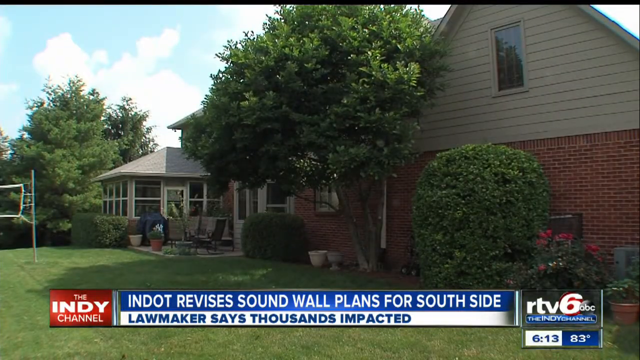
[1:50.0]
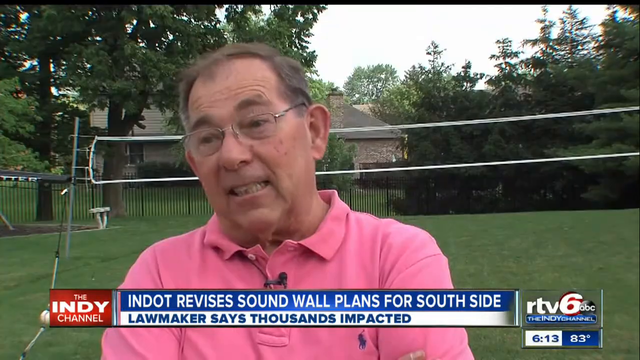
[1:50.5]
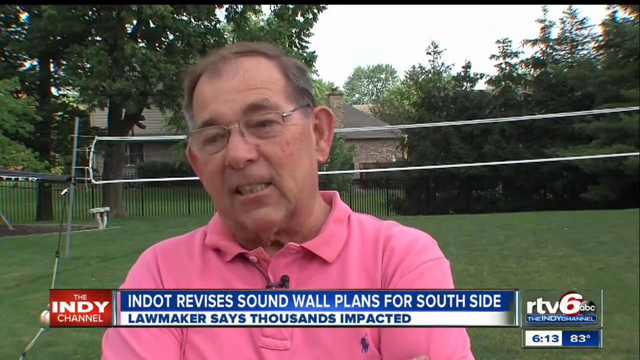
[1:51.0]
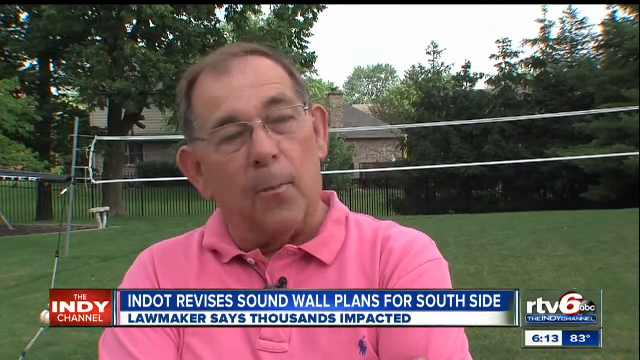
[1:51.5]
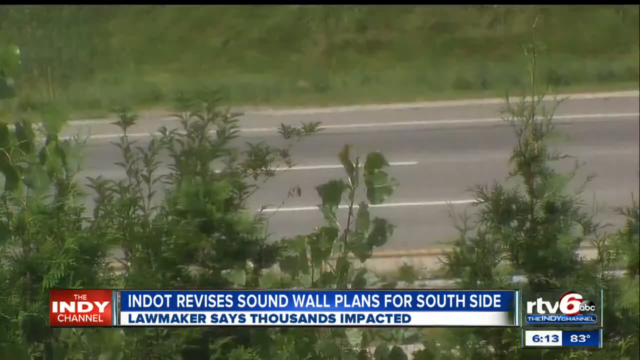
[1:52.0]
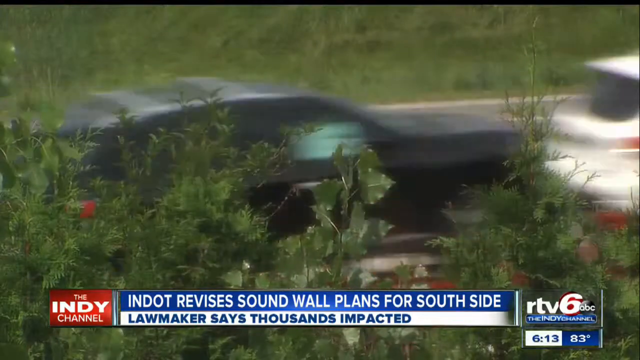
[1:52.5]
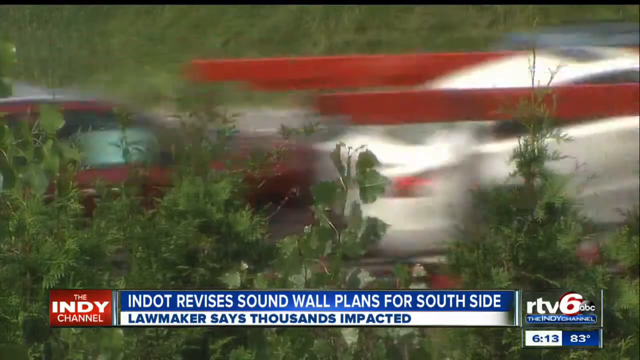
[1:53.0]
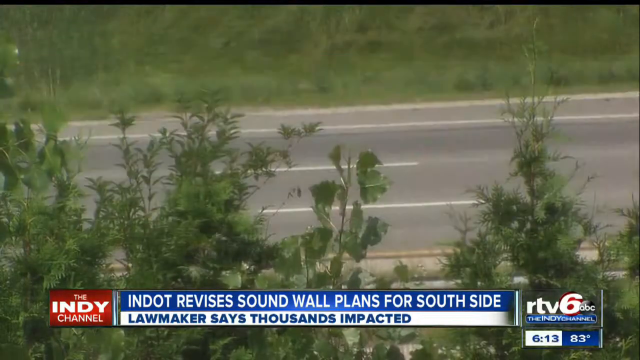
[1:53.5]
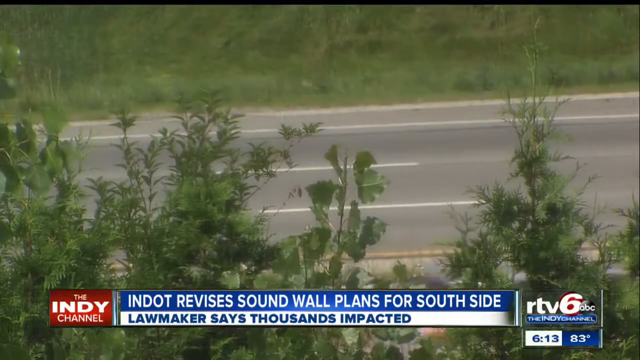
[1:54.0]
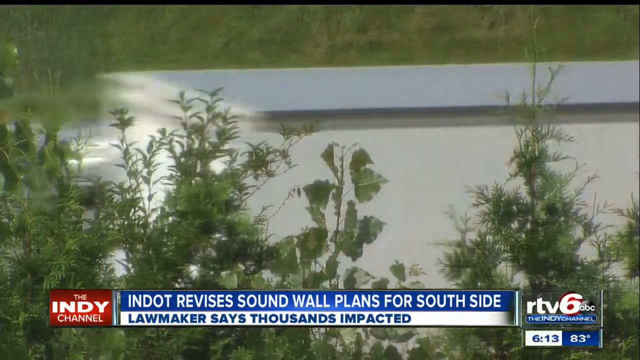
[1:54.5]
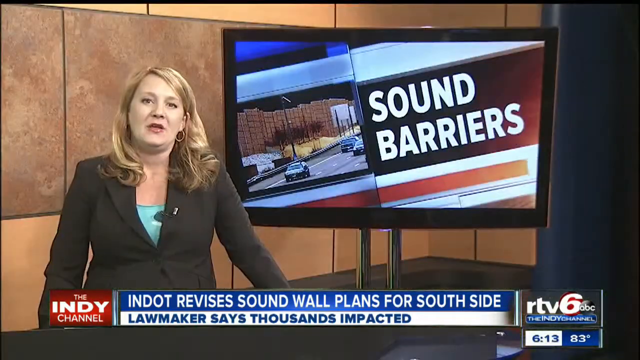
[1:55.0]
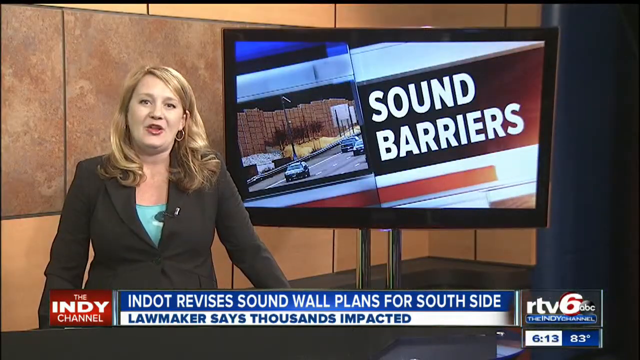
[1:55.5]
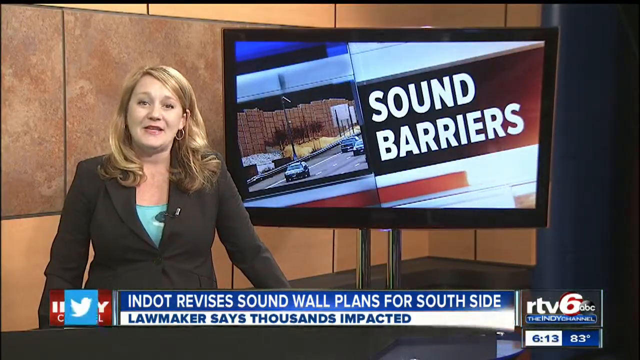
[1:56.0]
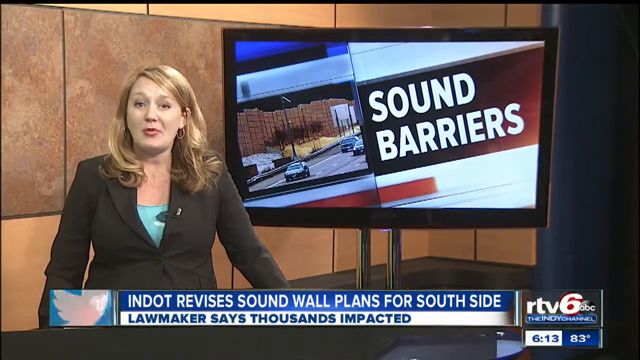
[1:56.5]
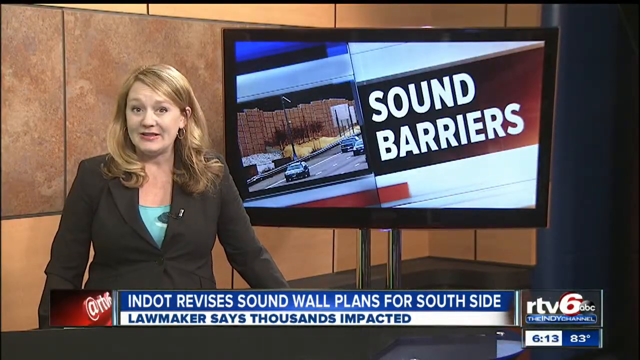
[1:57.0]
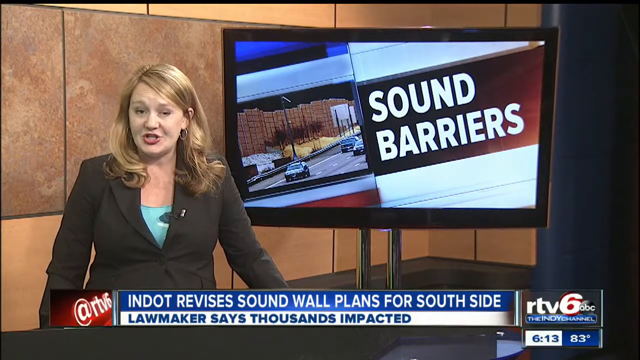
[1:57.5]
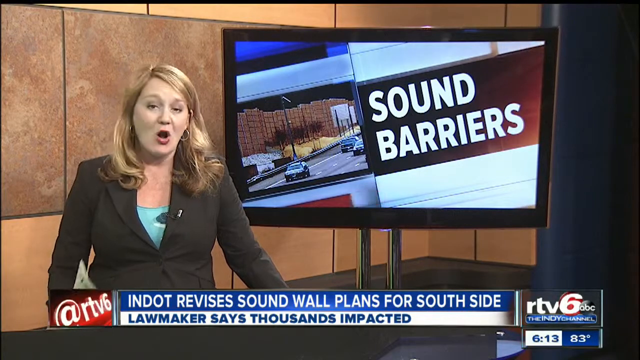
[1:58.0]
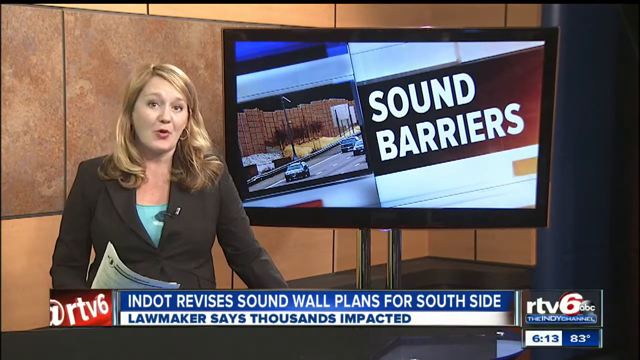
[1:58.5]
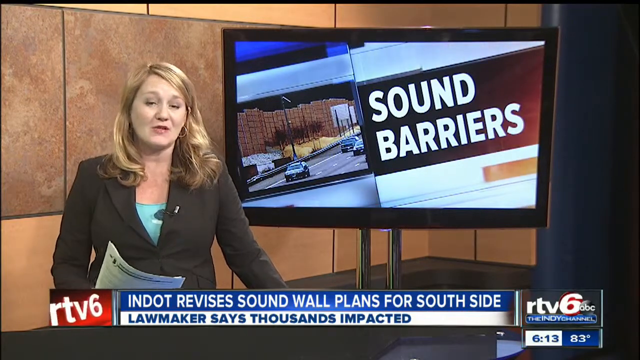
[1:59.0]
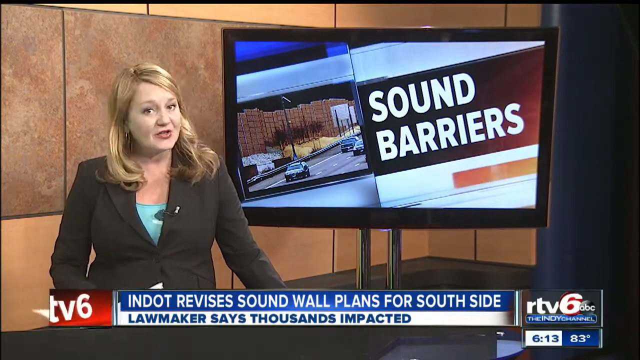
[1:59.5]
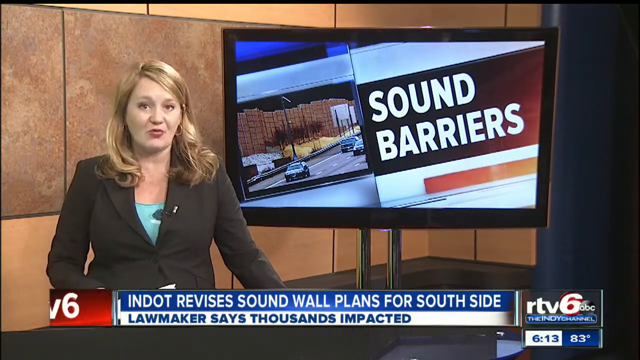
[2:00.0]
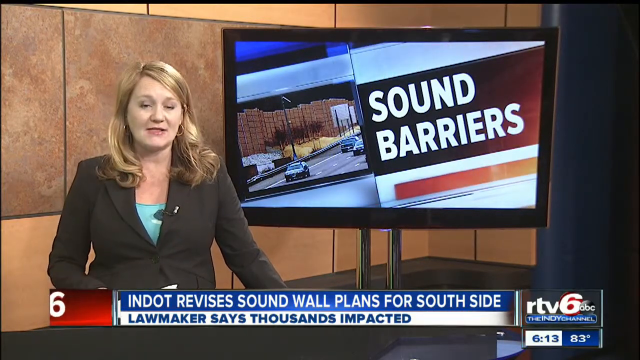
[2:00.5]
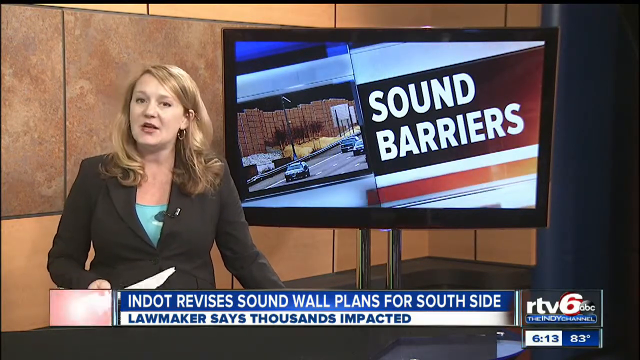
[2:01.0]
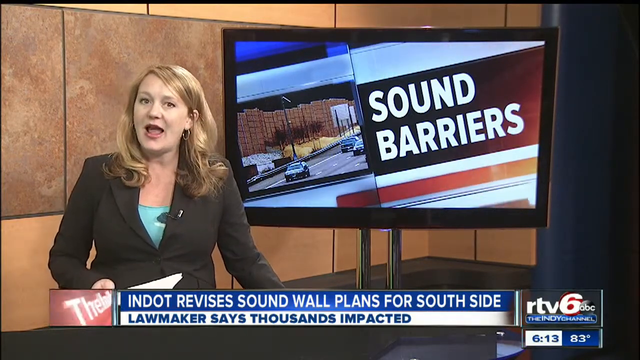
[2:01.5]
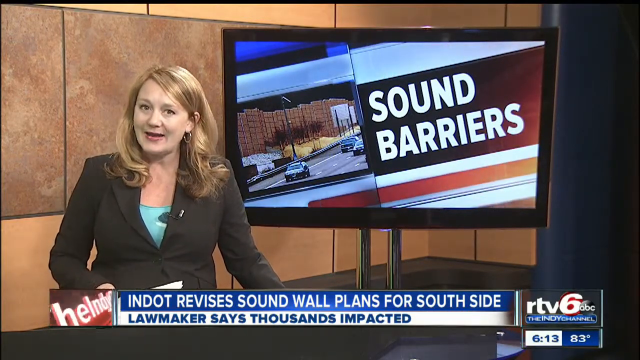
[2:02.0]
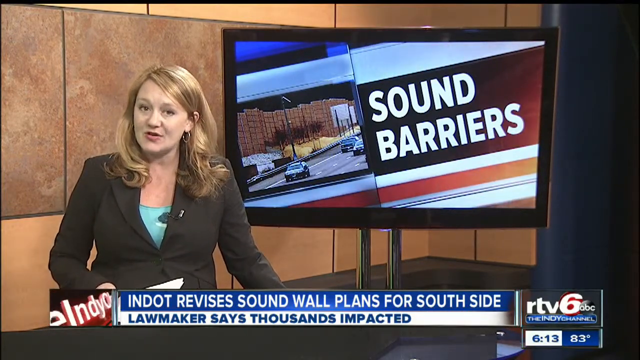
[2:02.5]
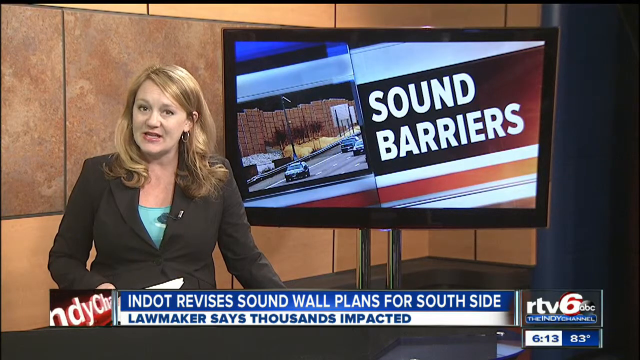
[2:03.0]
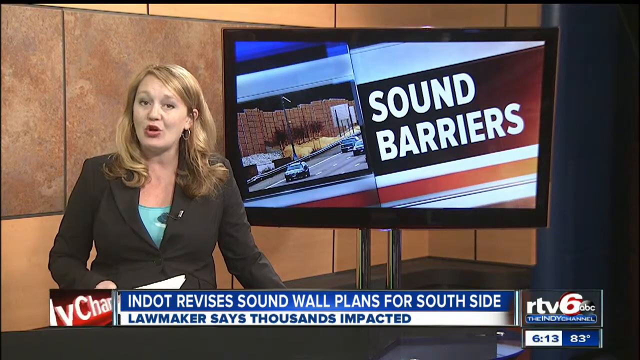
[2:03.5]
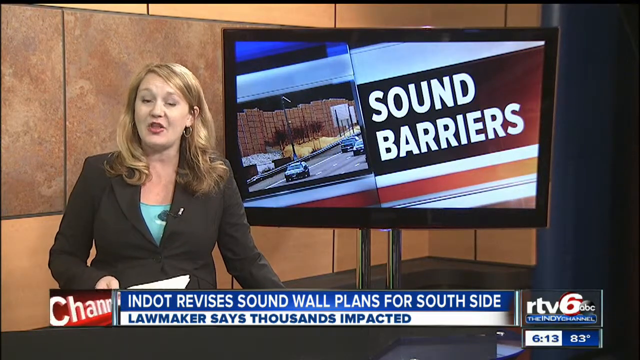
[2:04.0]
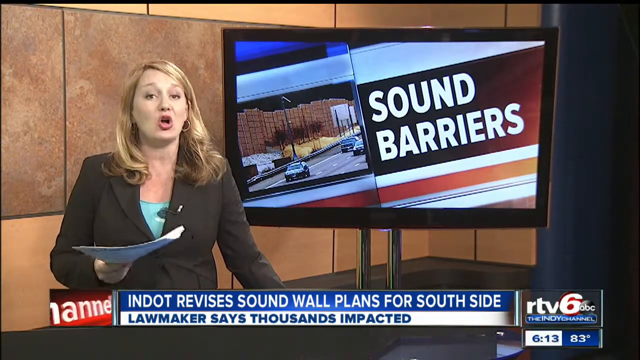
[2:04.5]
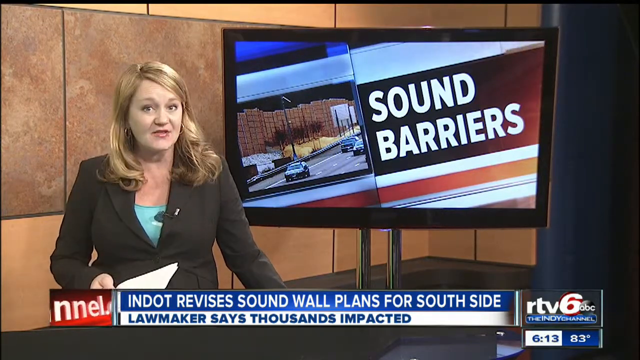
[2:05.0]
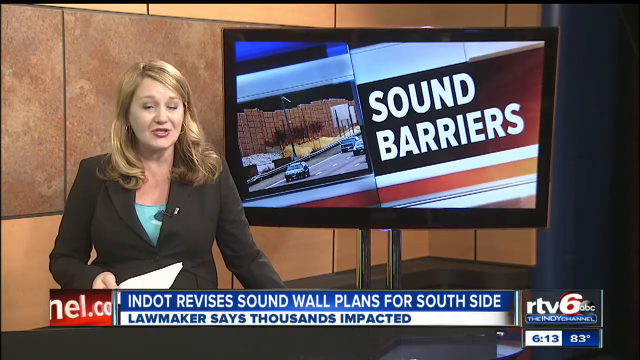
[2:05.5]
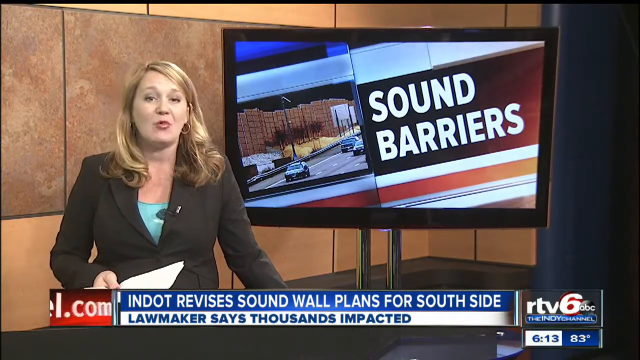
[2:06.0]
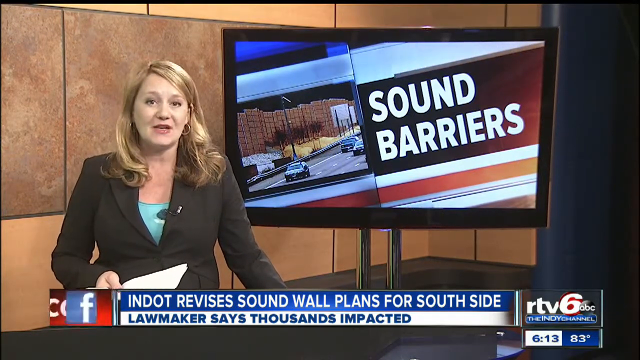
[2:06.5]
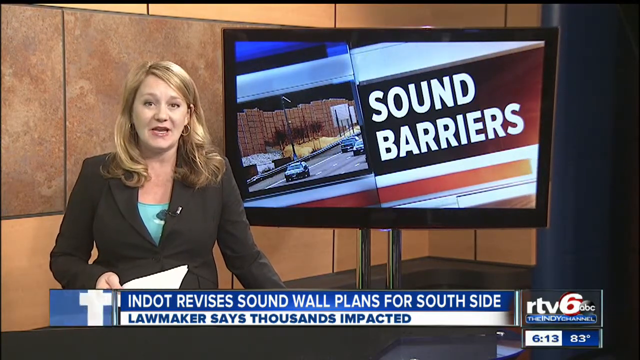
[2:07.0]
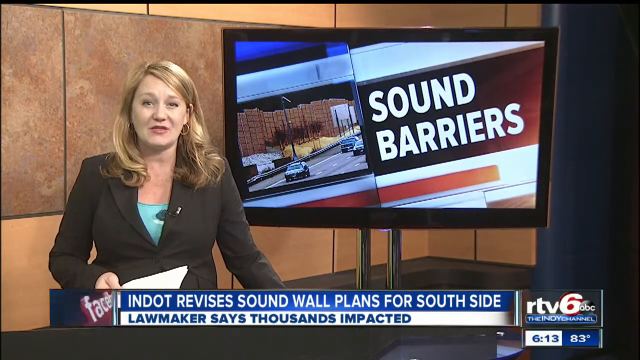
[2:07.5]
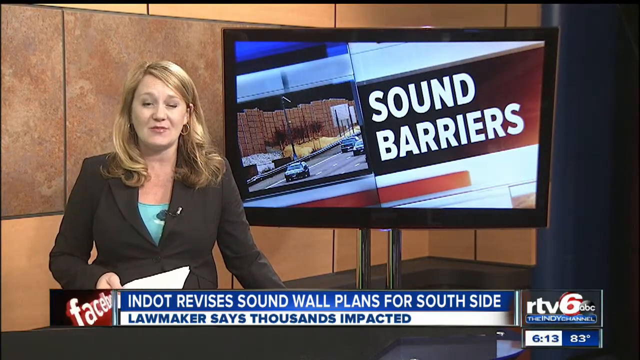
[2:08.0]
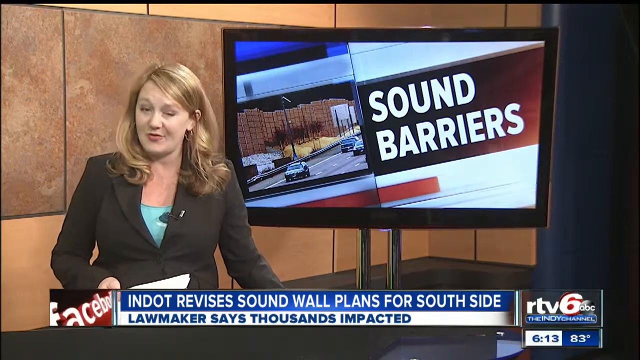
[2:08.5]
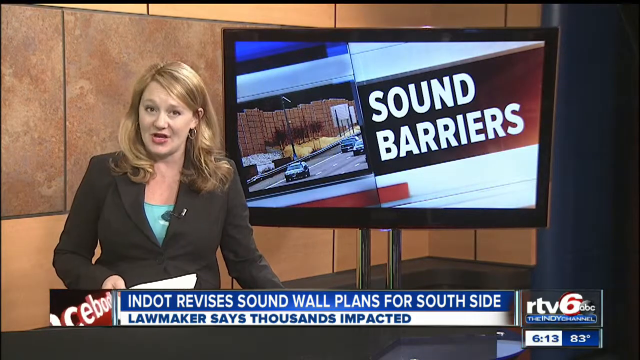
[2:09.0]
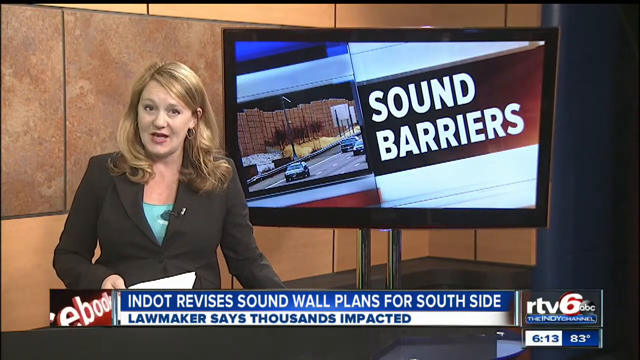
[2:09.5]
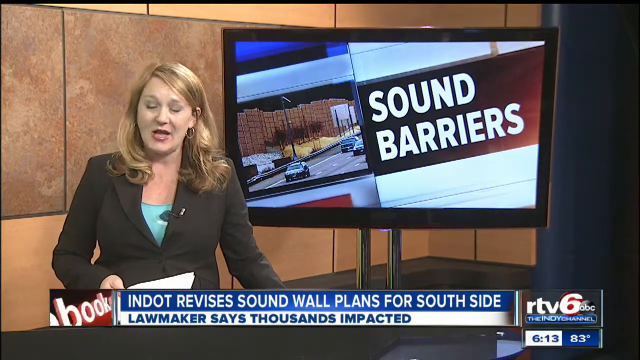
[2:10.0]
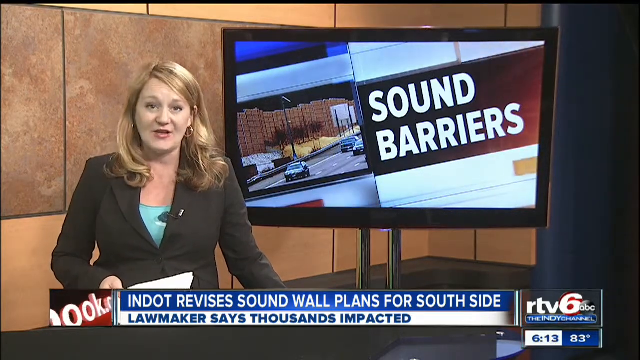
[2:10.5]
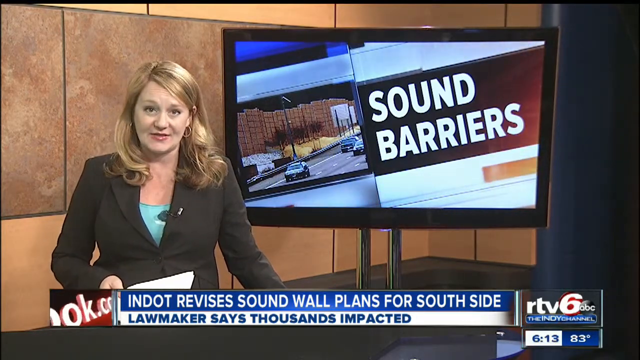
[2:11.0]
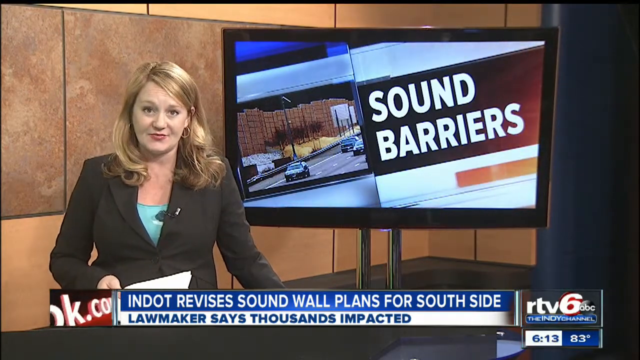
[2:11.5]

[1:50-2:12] The sound barrier and sound wall plan, which needs financial tenders, is meant to make the area less noisy.